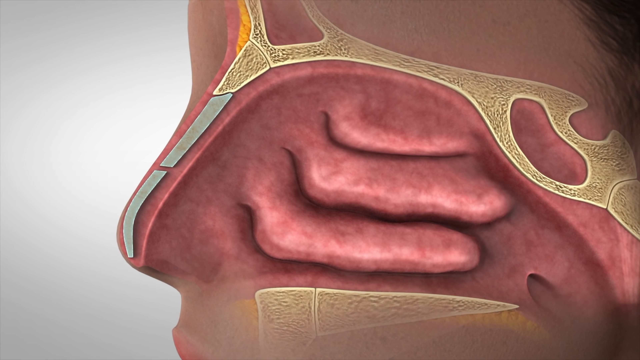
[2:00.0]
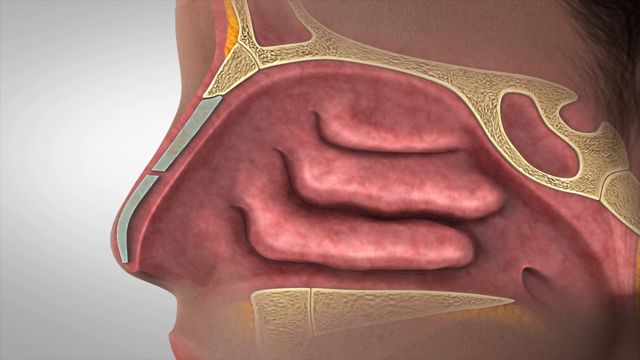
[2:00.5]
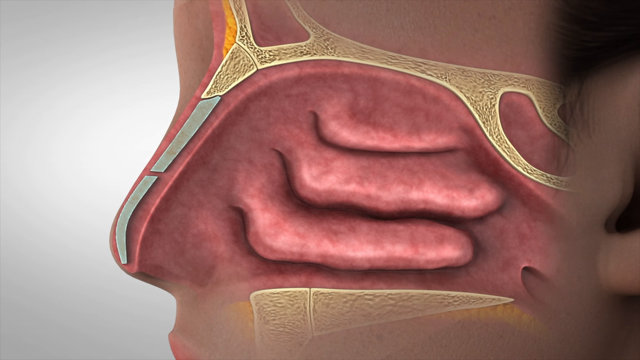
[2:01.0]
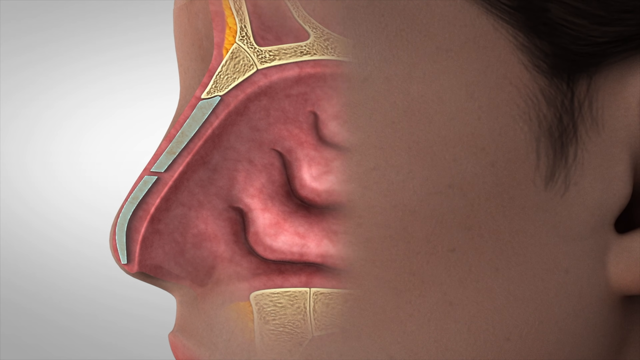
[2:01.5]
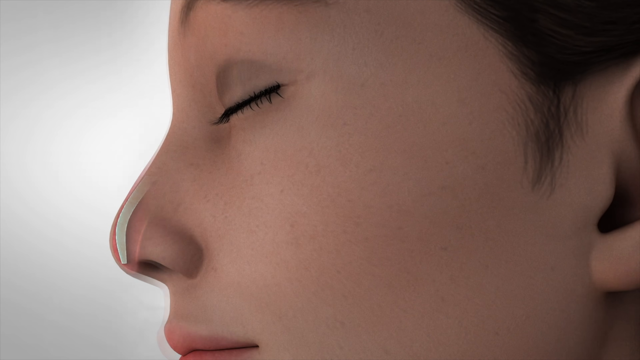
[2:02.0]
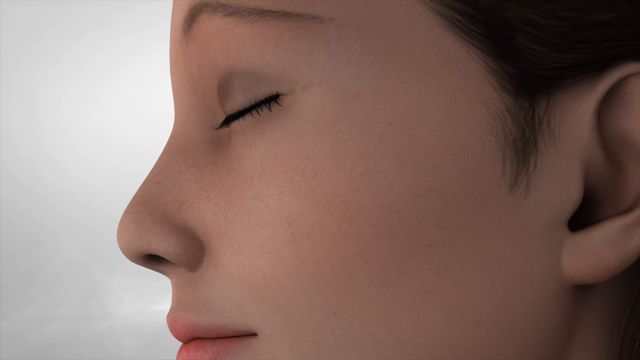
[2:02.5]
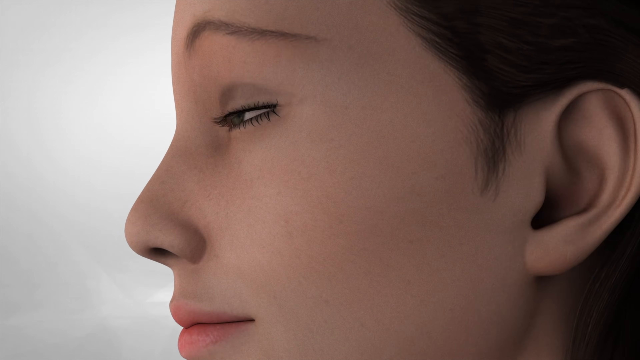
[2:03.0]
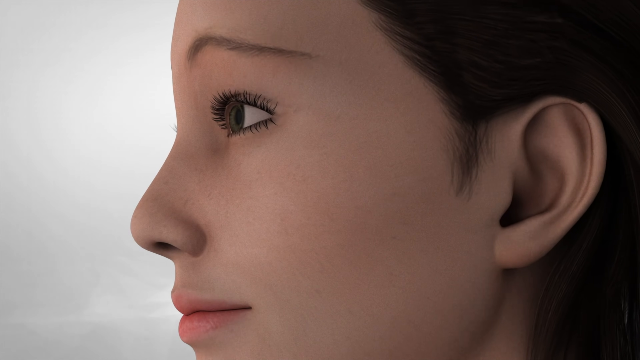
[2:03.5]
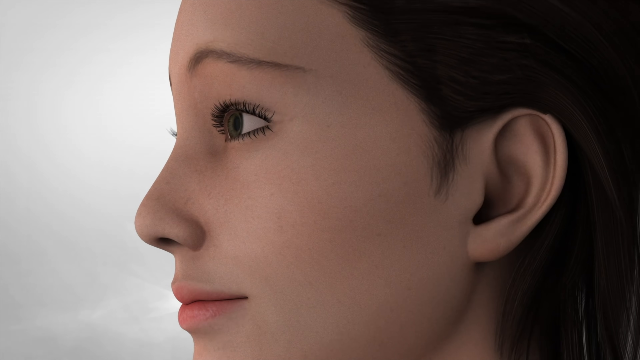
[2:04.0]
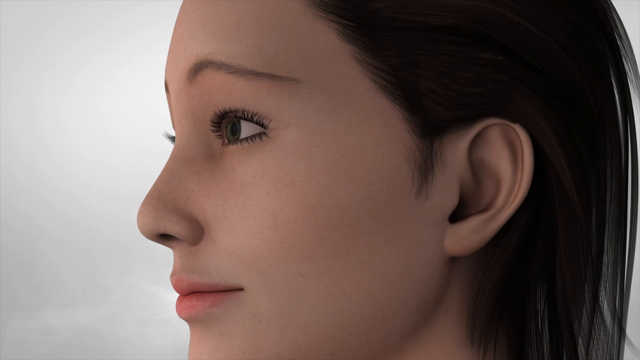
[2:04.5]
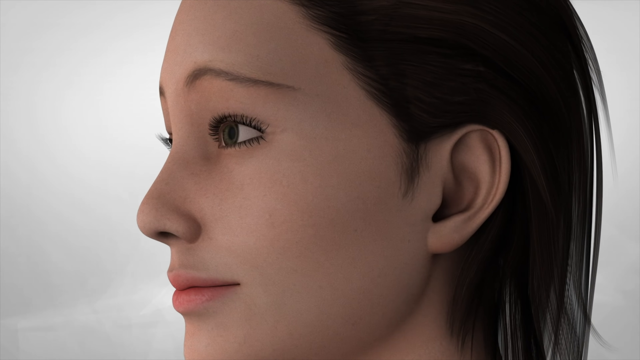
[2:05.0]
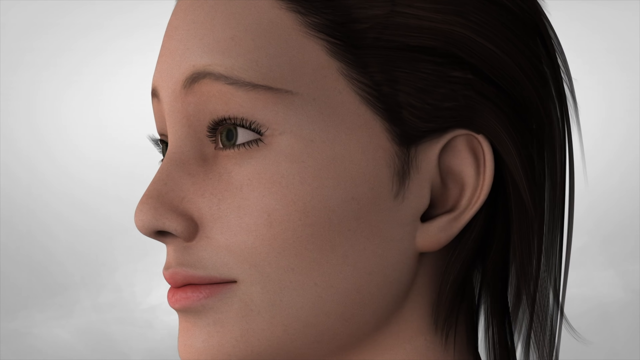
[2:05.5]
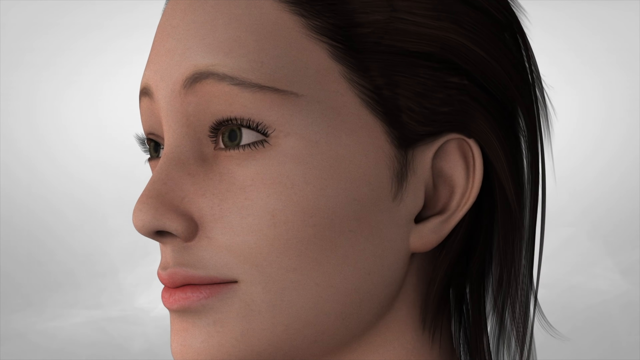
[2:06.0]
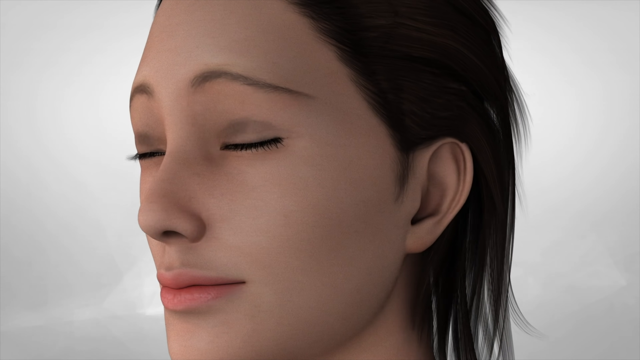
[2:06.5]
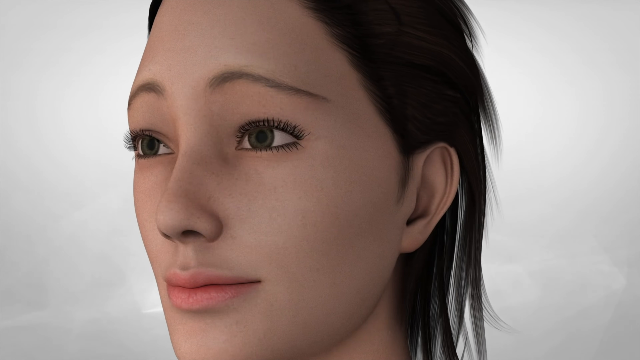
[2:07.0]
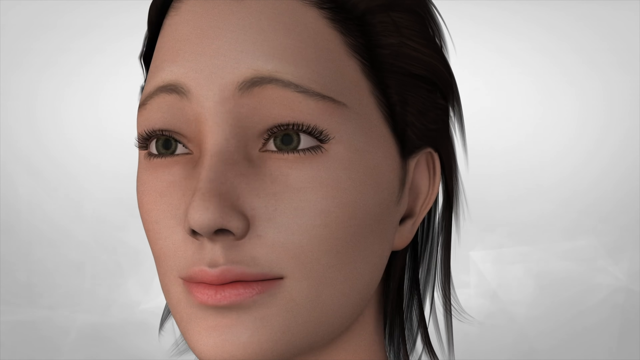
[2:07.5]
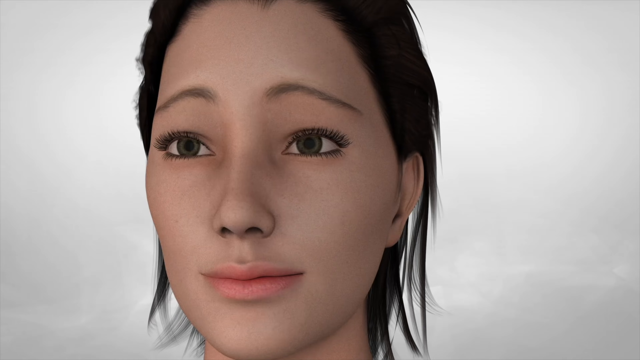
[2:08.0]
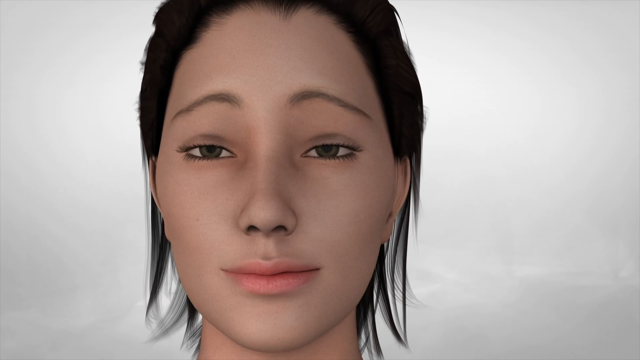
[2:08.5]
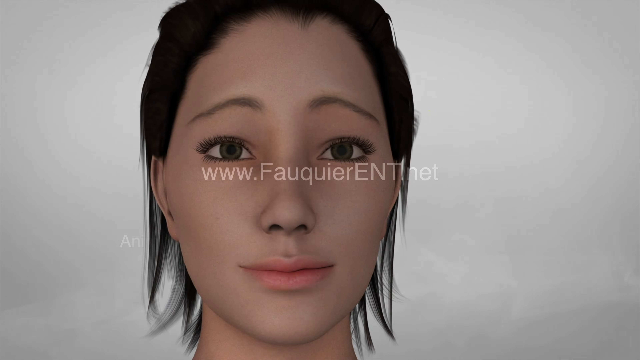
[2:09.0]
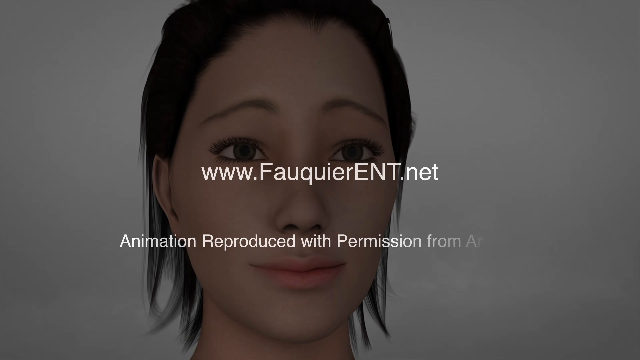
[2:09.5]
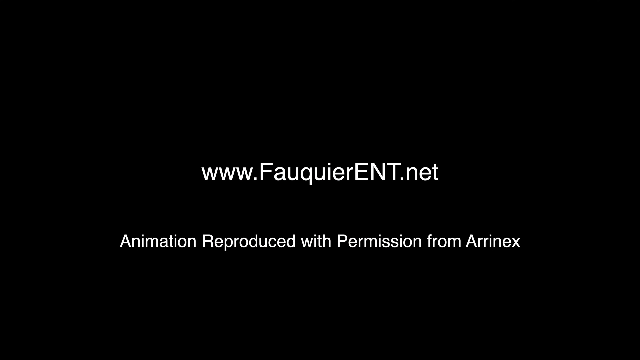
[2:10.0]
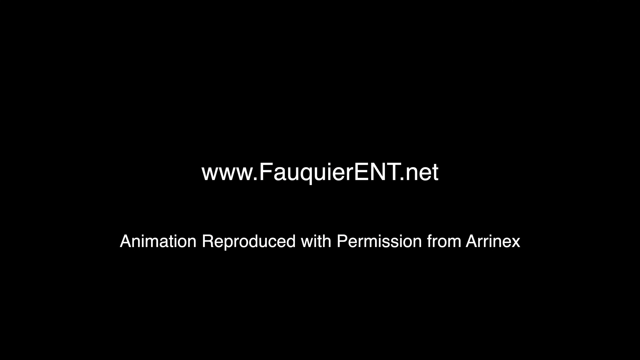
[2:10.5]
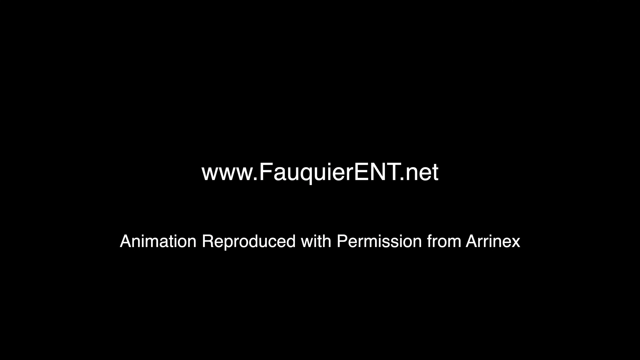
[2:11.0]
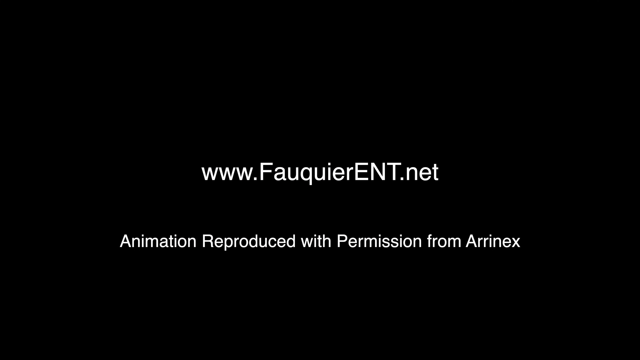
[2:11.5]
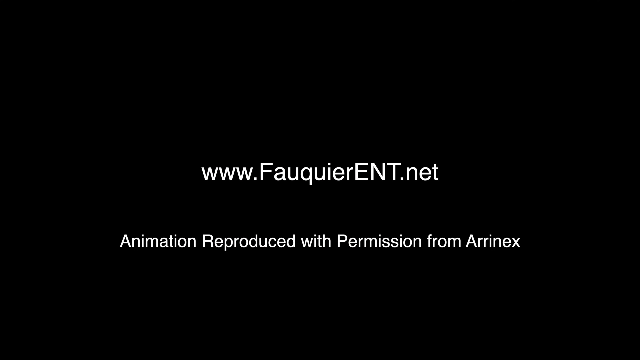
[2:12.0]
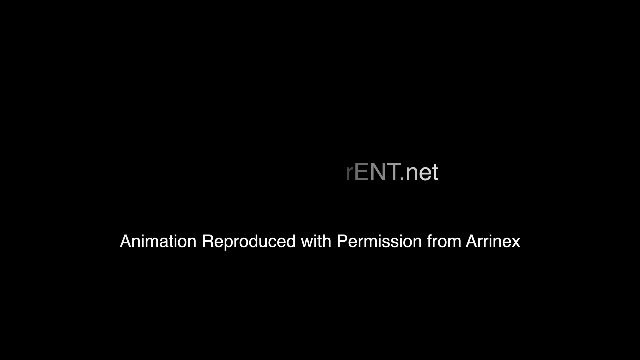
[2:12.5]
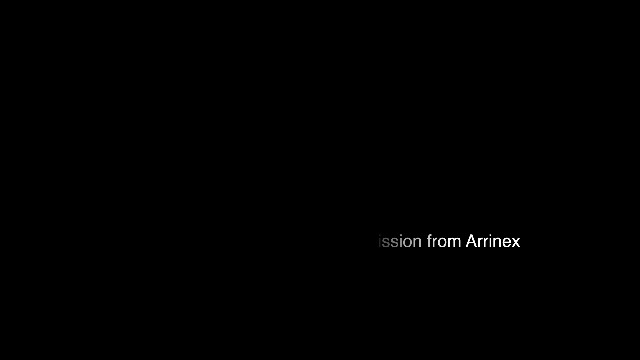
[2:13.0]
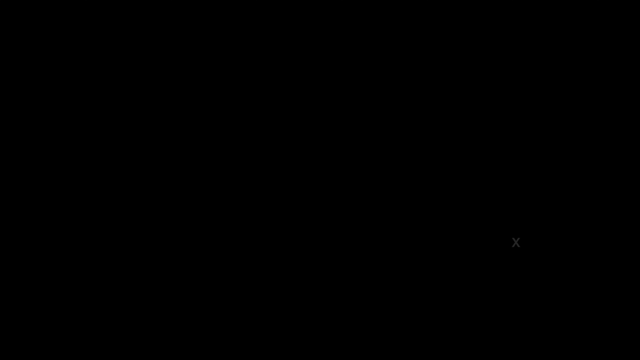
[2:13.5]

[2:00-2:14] The view zooms out of the animated nasal passage and returns to the animated woman, who possibly looks slightly more relieved than before but still has a mostly blank face. An ad for the website FowlQueerEnt.net follows, apparently the company sponsoring the Clarifix device, in white font on a plain black screen. It mentions "animation reproduced with permission from RNX". The bottom statement appears to have many capitalizations and seemingly some grammatical errors.